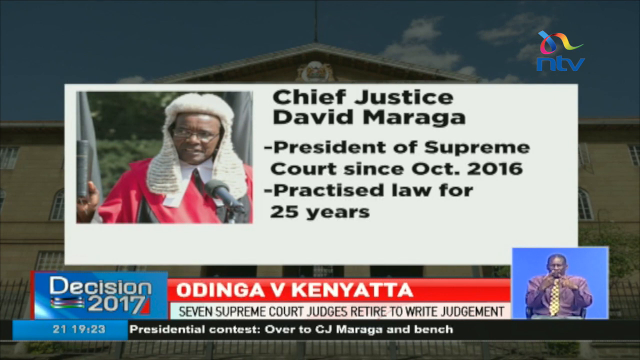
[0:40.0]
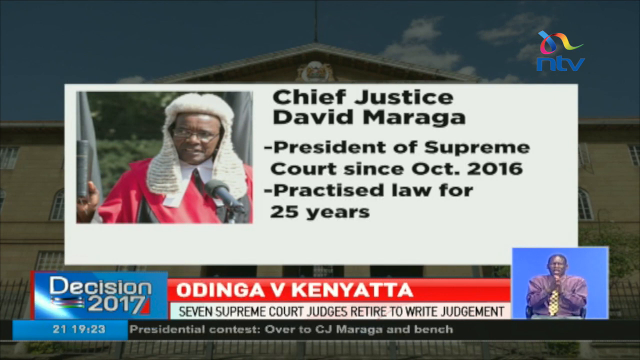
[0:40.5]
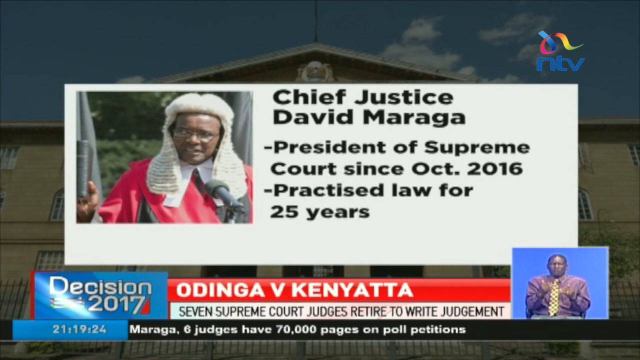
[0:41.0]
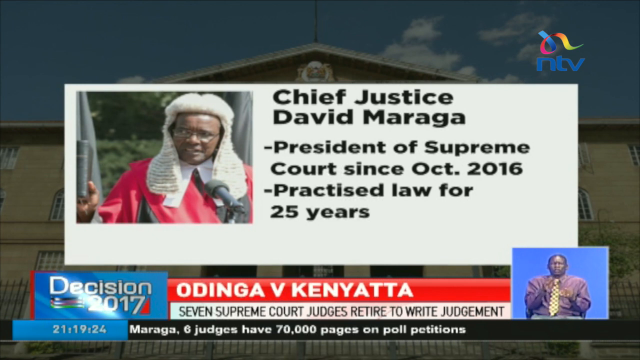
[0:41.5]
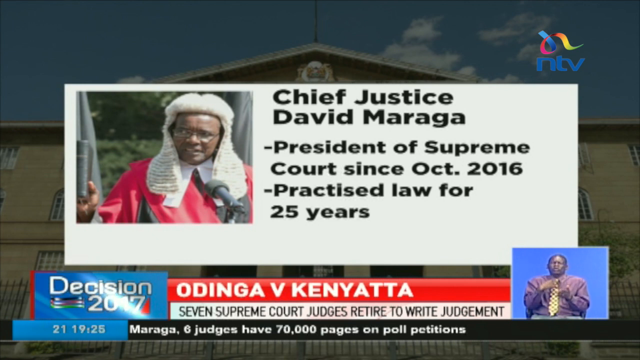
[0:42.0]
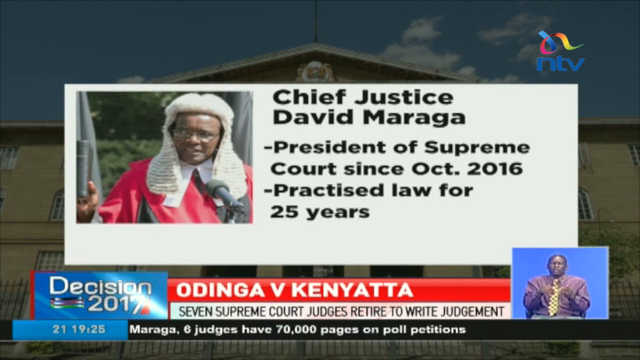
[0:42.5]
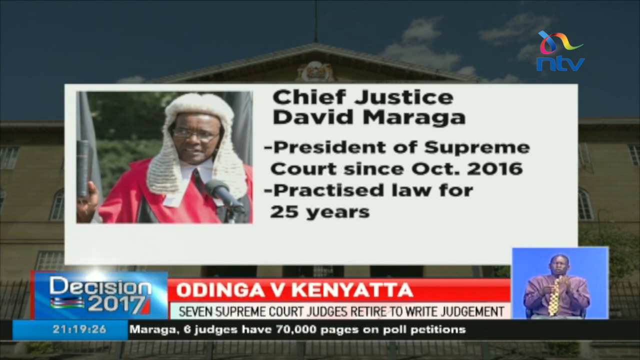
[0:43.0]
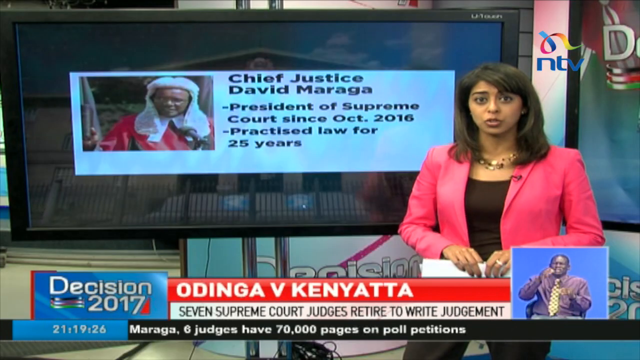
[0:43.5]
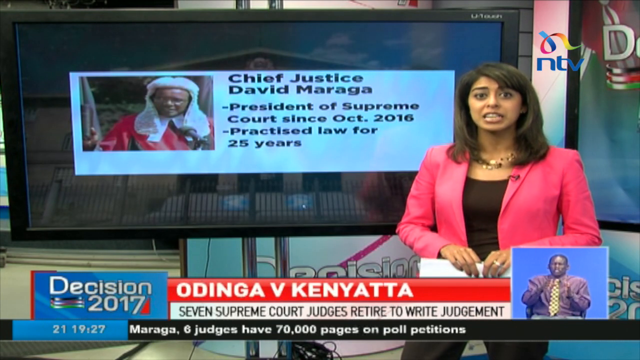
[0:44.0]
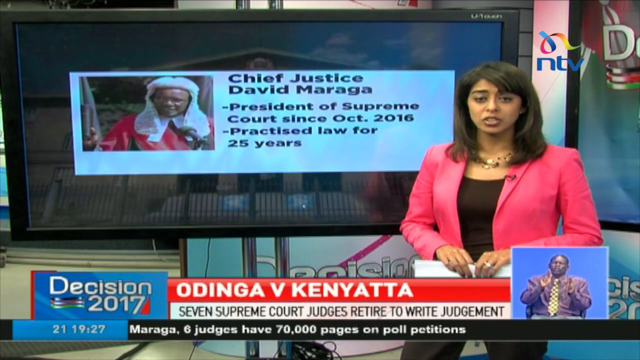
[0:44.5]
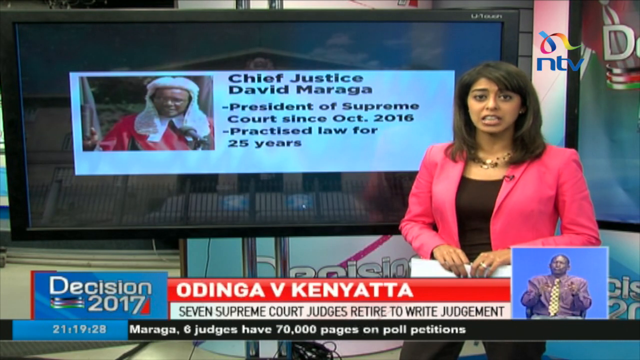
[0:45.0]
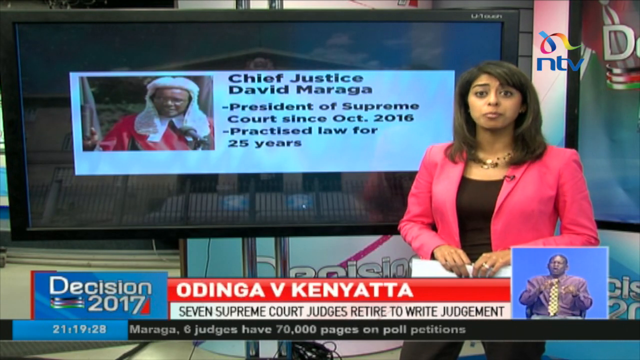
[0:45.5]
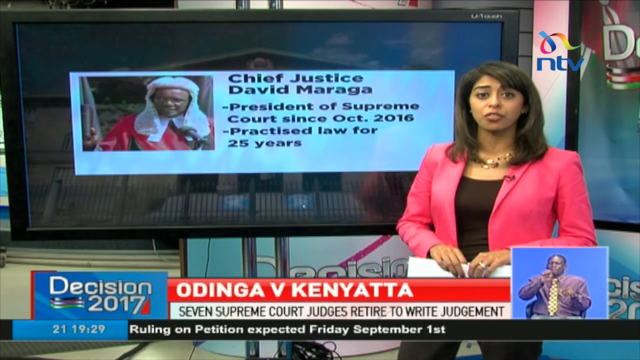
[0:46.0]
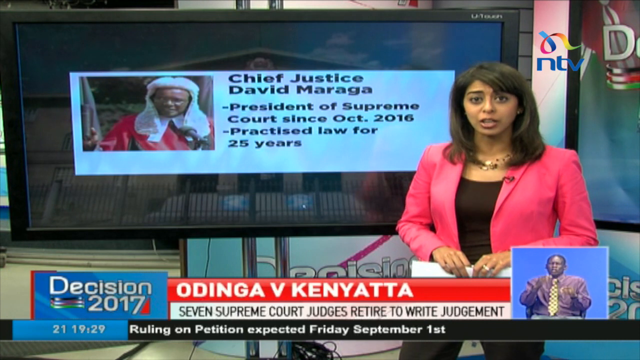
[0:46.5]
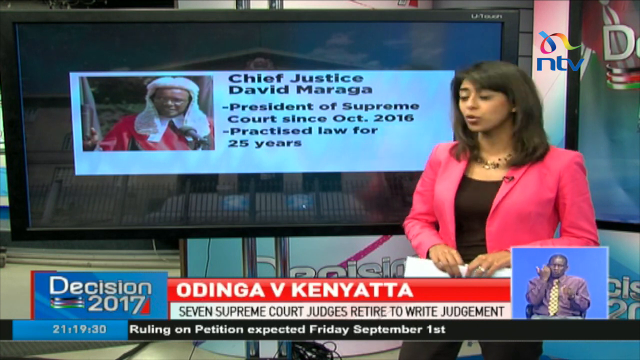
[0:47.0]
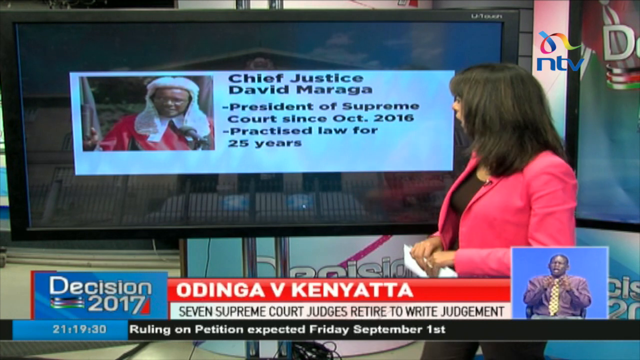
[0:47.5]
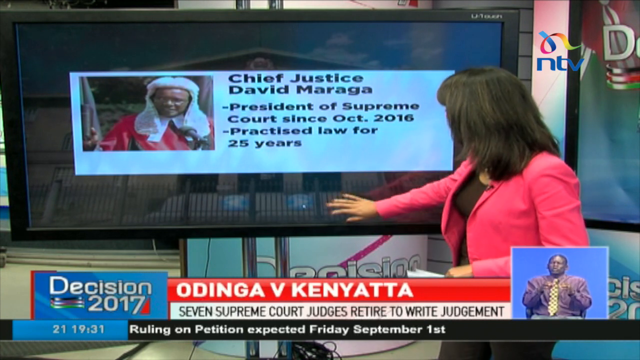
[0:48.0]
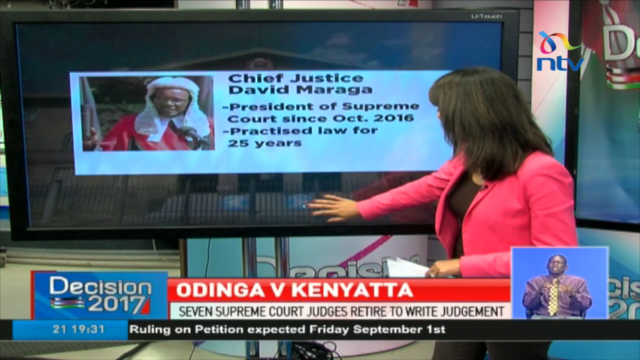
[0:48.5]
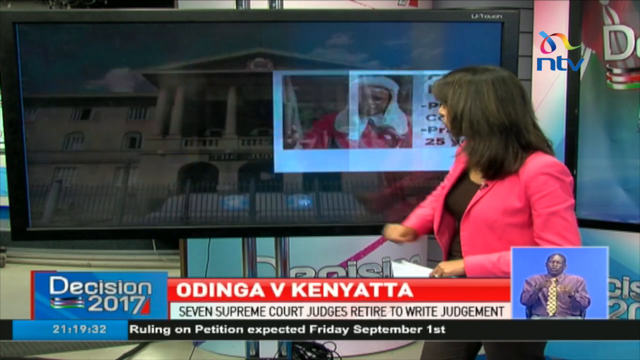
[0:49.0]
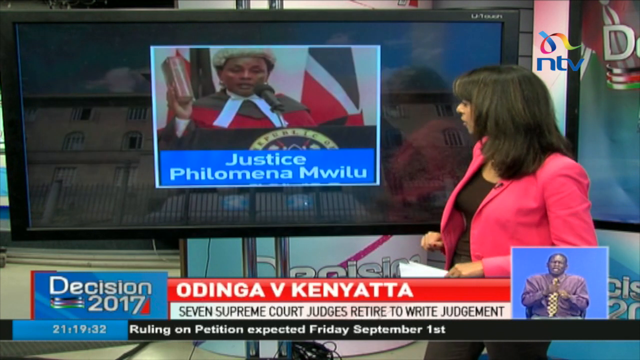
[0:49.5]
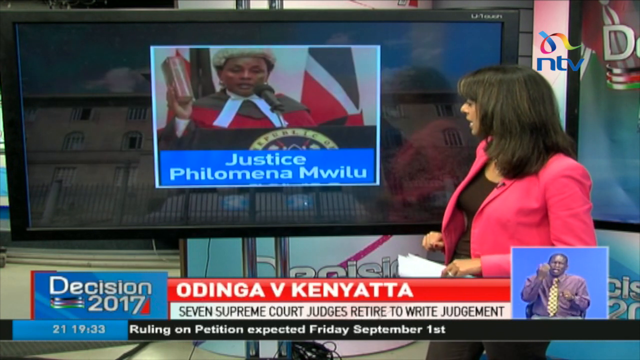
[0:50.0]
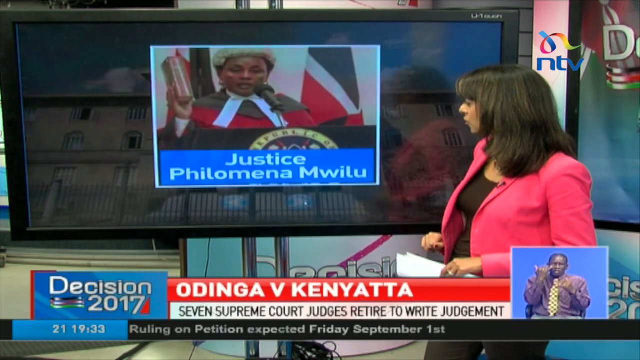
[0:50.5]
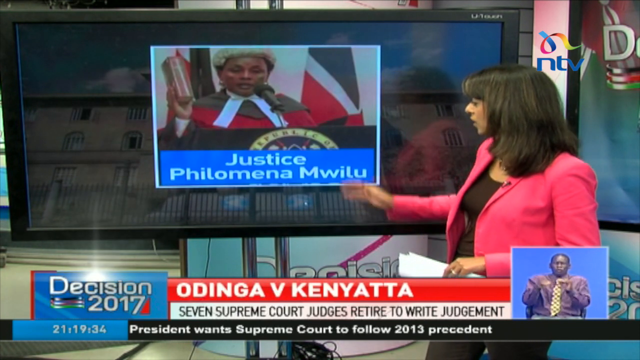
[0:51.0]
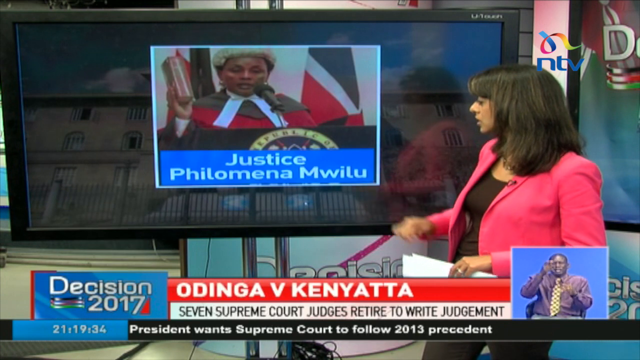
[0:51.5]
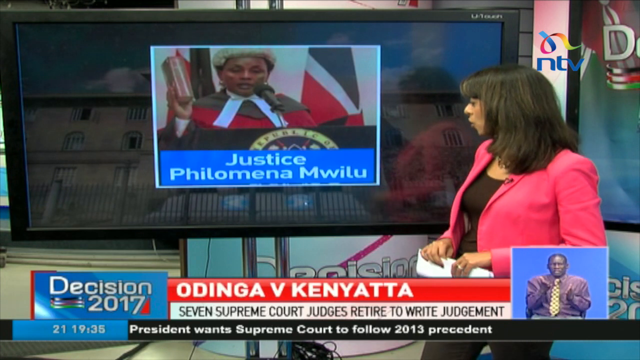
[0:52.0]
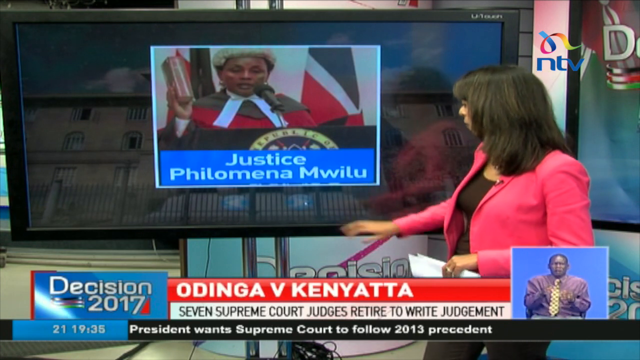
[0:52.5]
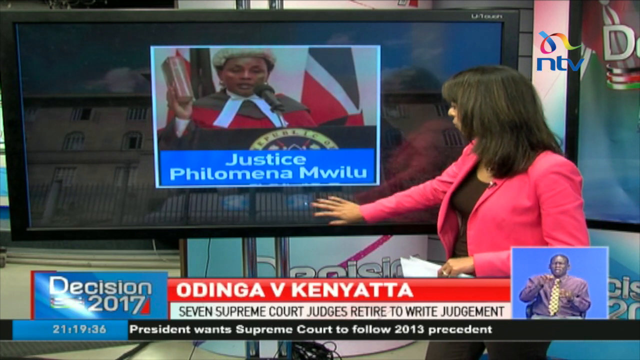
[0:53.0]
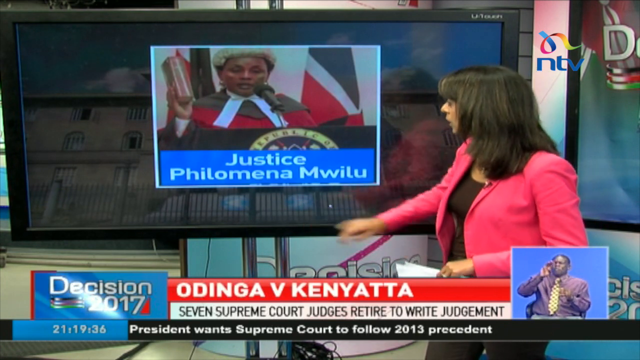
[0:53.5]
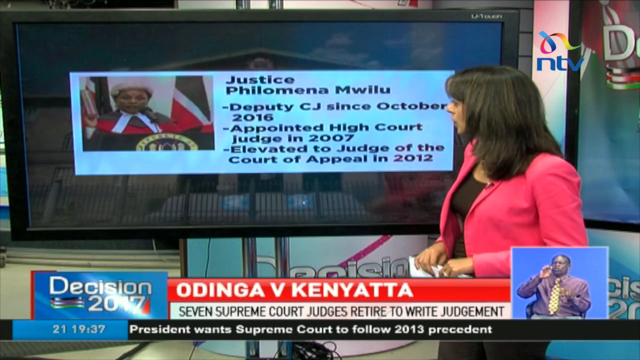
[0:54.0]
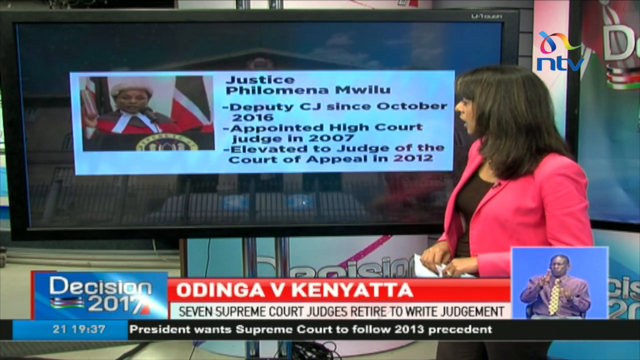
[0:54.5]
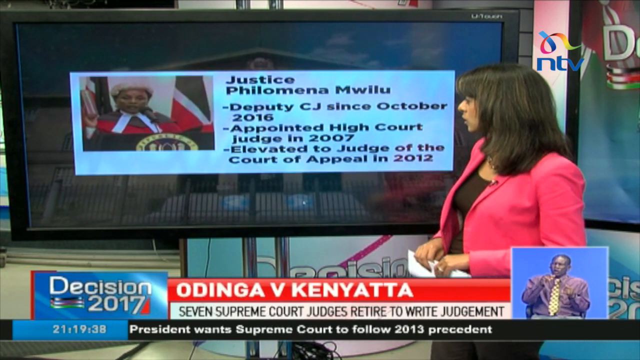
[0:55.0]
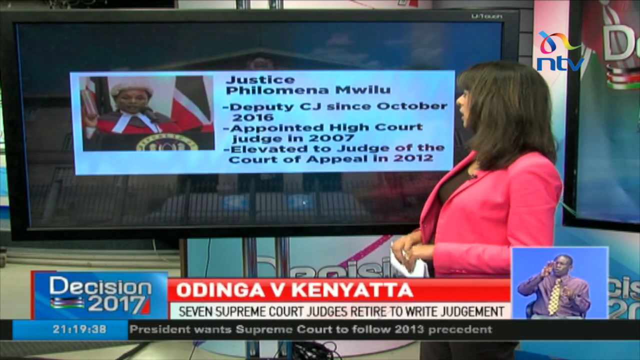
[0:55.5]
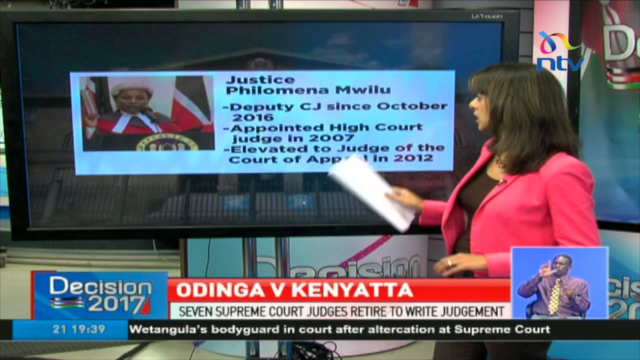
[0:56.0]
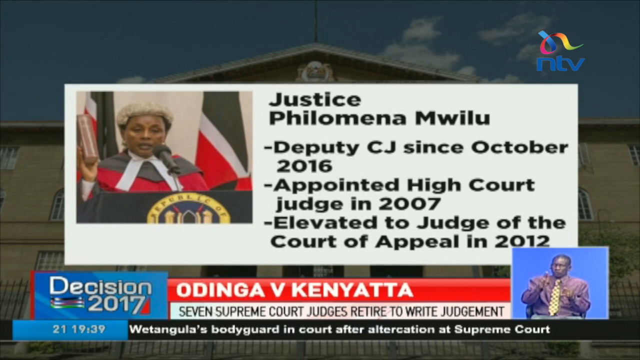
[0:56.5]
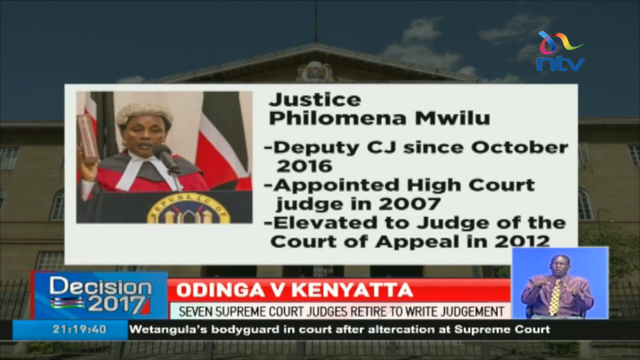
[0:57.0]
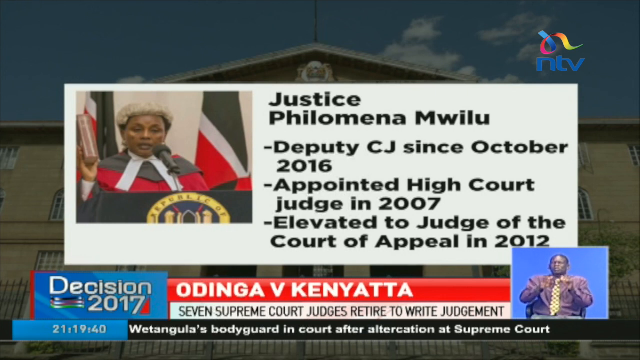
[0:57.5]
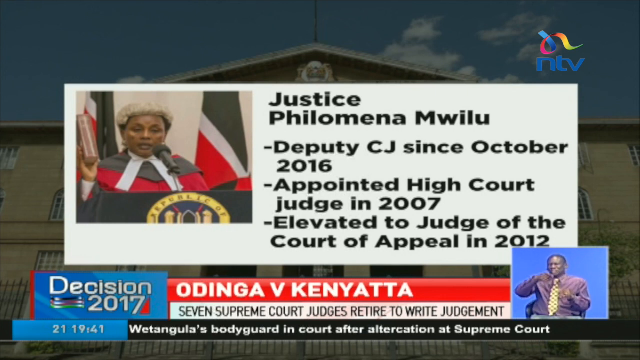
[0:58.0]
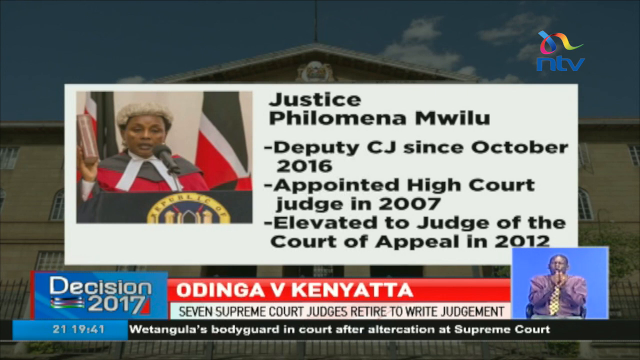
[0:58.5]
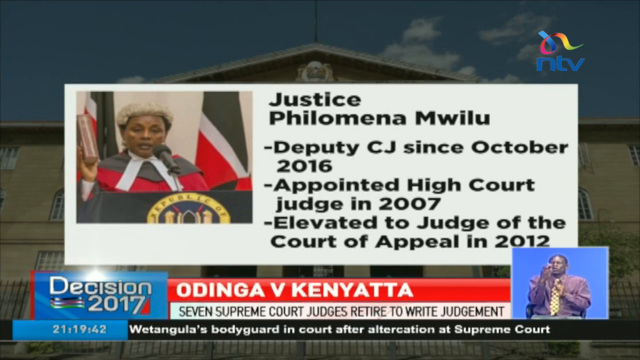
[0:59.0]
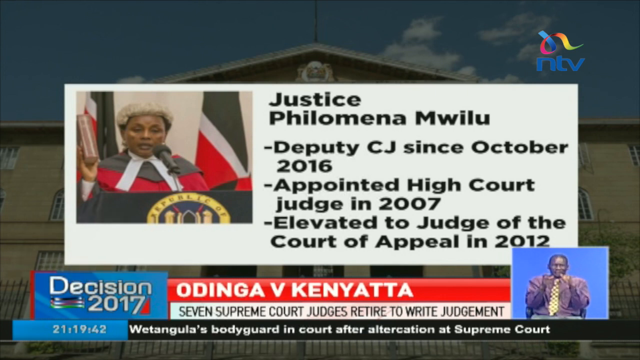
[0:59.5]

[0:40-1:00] A full-screen picture shows Chief Justice David Maraga, an African man wearing a white judge's and barrister's wig and a red robe. Beside the picture it says "Chief Justice David Maraga, President of Supreme Court since October, 2016. Practice law for 25 years." At the bottom of the screen is a blue rectangular box reading "Decision 2017," next to it a red box reading "Odinga v. Kenyatta," and underneath a white box reading "Seven Supreme Court judges retired to write judgment." In the bottom right-hand corner, an African man in a light purple button-up shirt and yellow tie stands in front of a blue background doing sign language. The scene changes to the female news reporter standing in front of a large TV screen showing the same image of Chief Justice David Maraga with the bullet points about him. She wears a dark pink blazer with a black top and holds white paper loosely folded in half, kind of just in front of her stomach. She turns to the screen and presses the forward play button, and another image appears of an African woman who looks like she is also wearing a white wig on top of her black hair. She wears a red and black robe and stands in front of a podium with a microphone, holding a book as if taking an oath. Under the image it says "Justice Philomena Mwilu." The reporter taps the forward play button again, and the image of the woman judge appears in a white rectangular box with the text "Justice Philomena Mwilu" and three dashed bullet points: "Deputy CJ since October, 2016," "Appointed high court judge in 2007," and "Elevated to judge of the Court of Appeal in 2012." This image is then blown up to full screen, with only the small frame of the sign language interpreter in the bottom right.